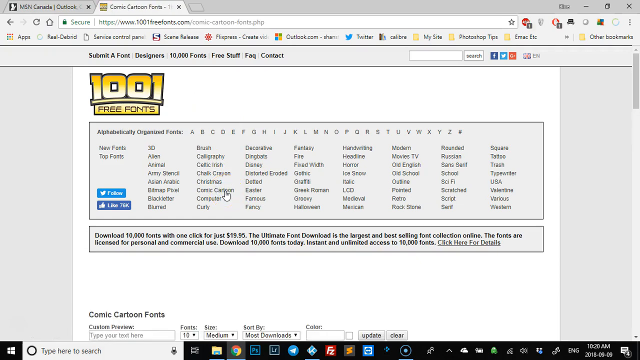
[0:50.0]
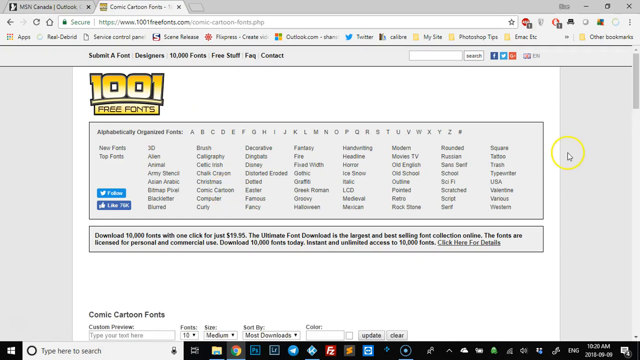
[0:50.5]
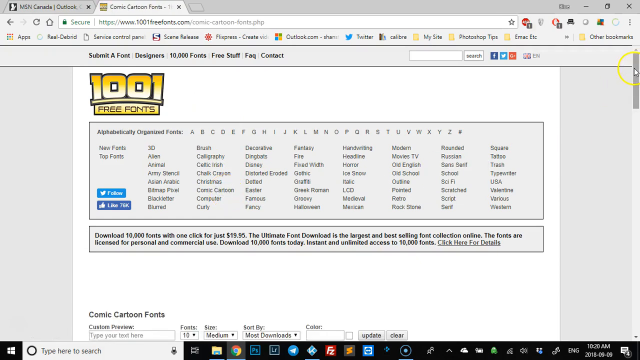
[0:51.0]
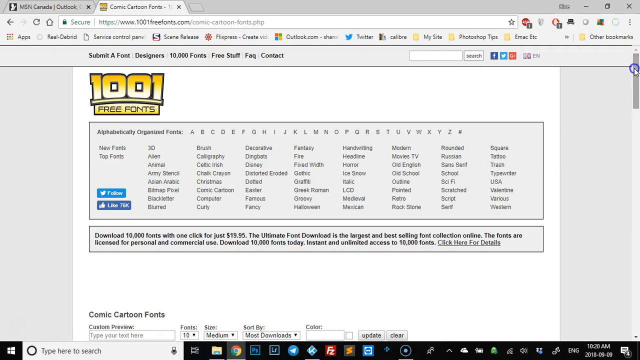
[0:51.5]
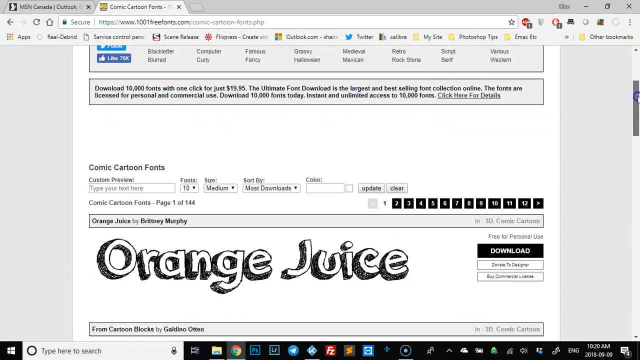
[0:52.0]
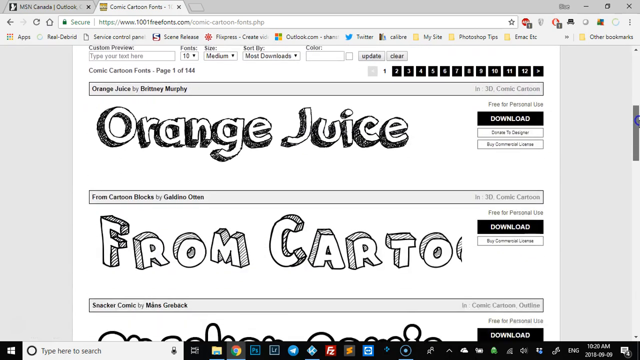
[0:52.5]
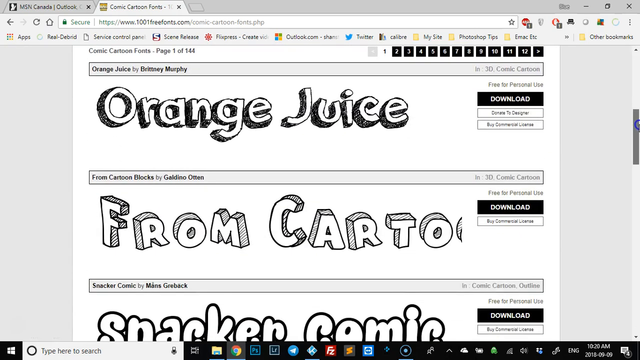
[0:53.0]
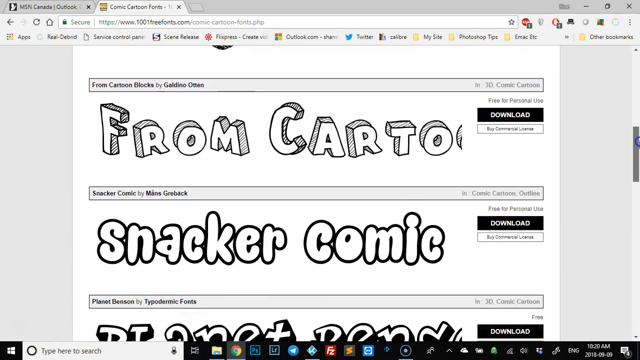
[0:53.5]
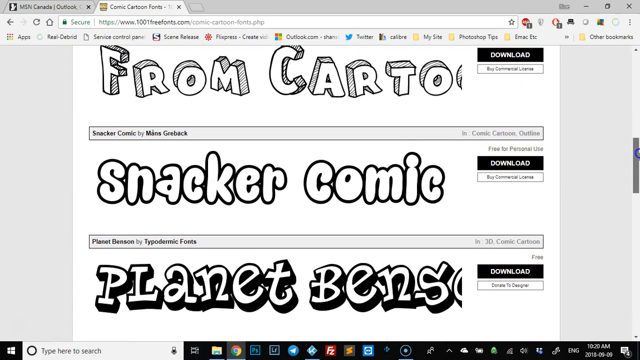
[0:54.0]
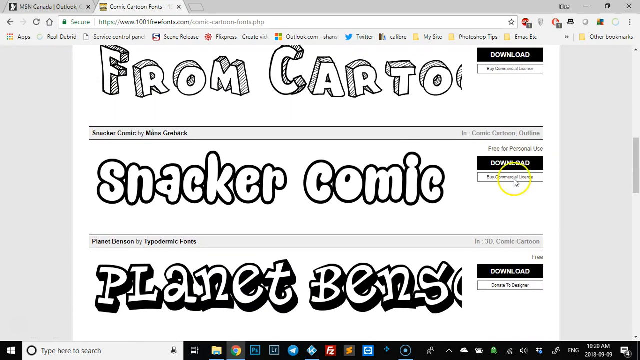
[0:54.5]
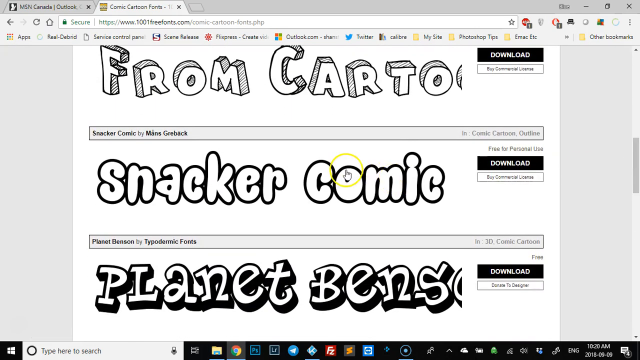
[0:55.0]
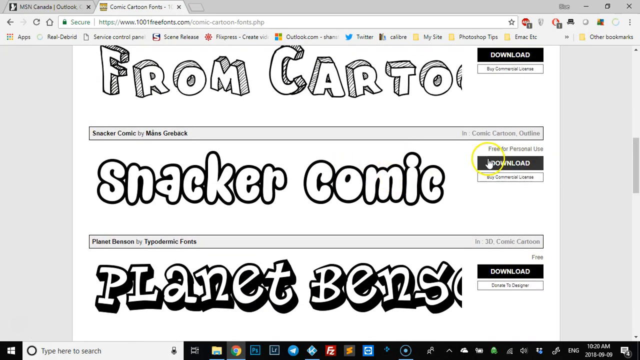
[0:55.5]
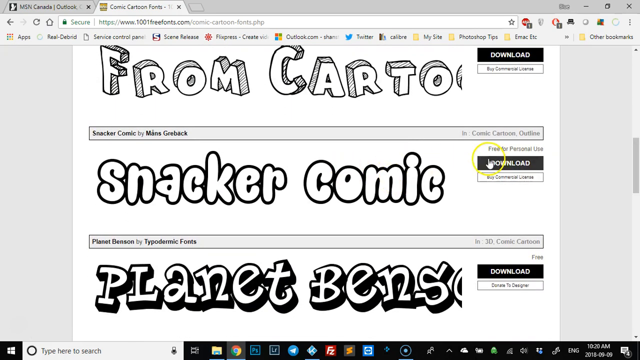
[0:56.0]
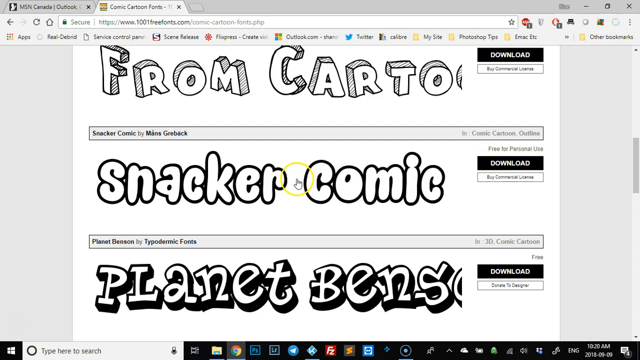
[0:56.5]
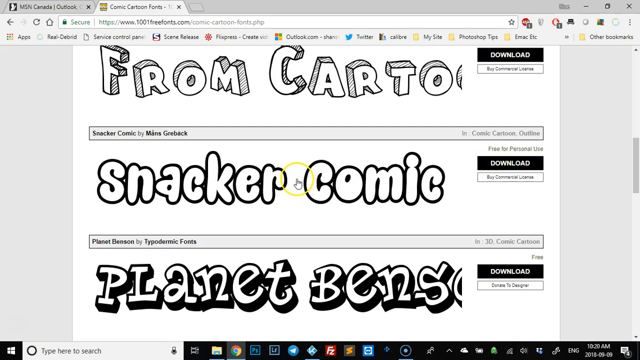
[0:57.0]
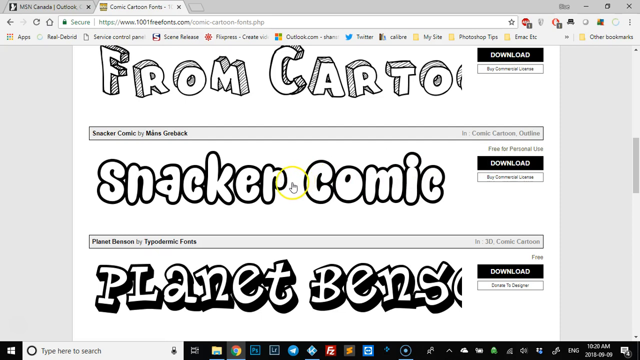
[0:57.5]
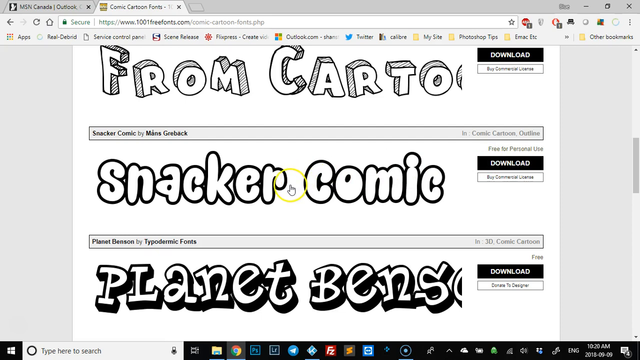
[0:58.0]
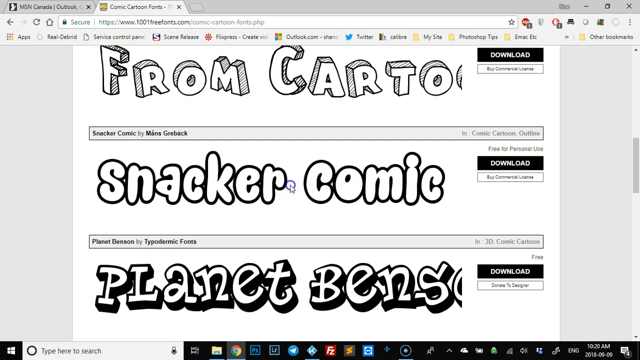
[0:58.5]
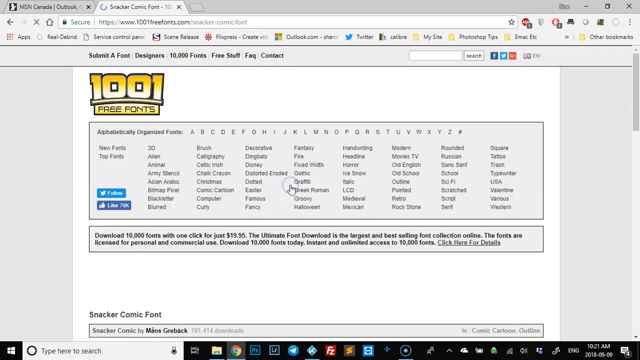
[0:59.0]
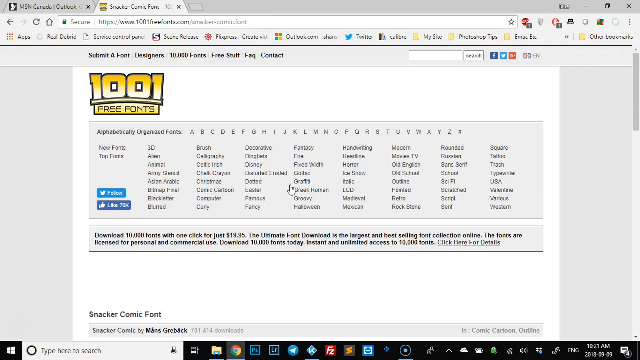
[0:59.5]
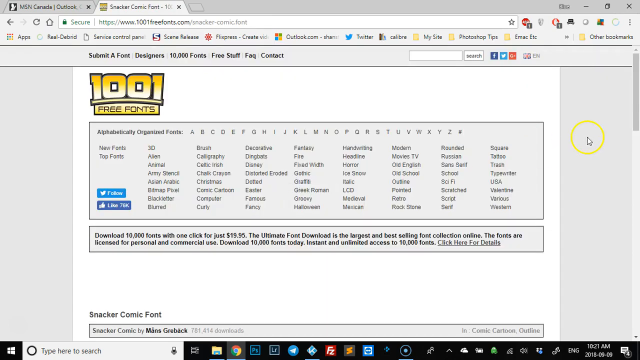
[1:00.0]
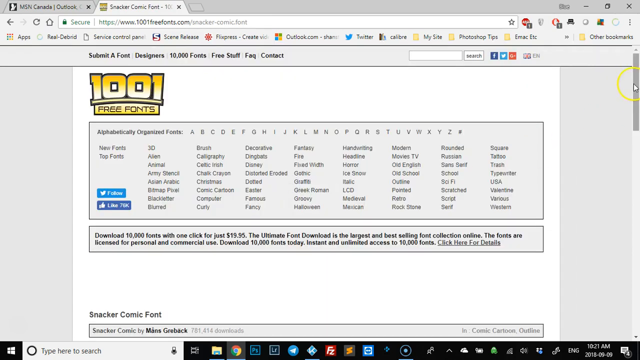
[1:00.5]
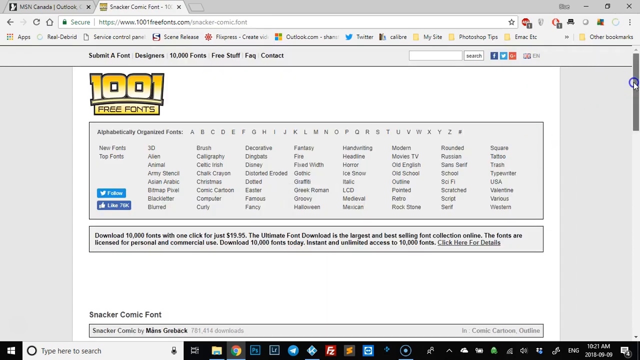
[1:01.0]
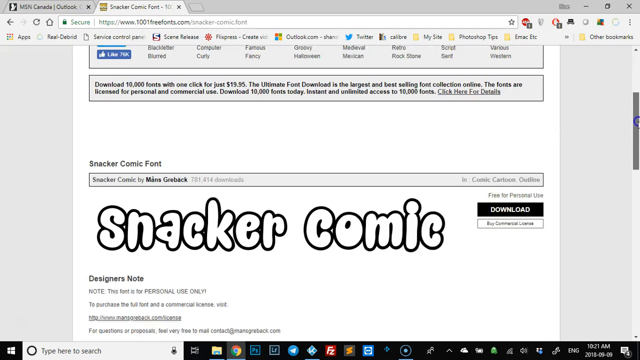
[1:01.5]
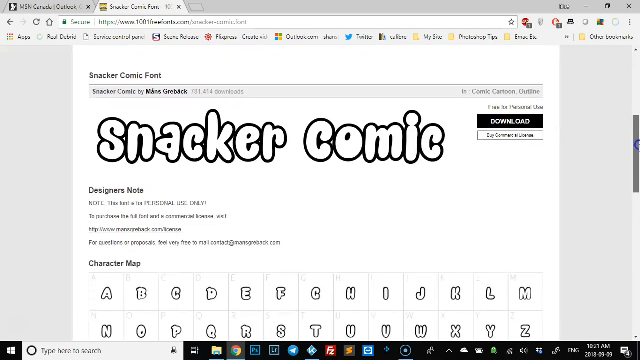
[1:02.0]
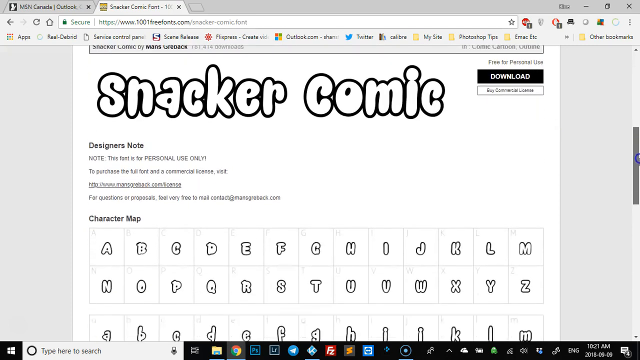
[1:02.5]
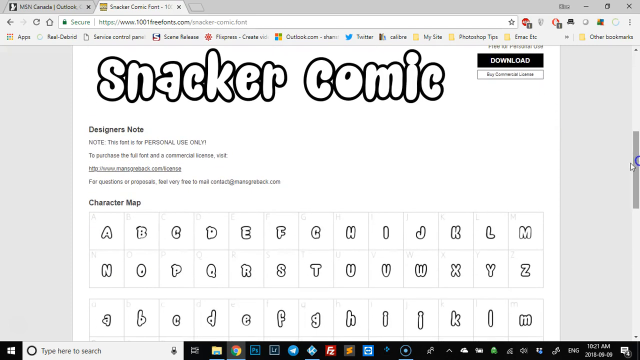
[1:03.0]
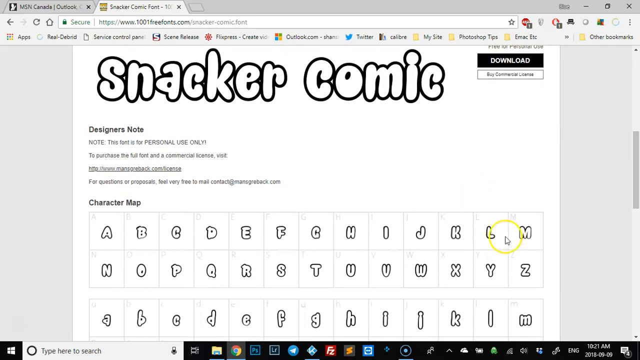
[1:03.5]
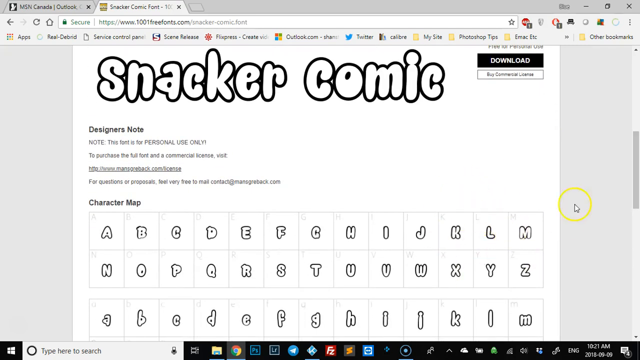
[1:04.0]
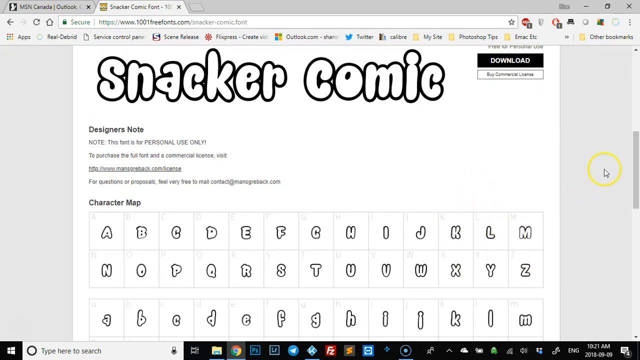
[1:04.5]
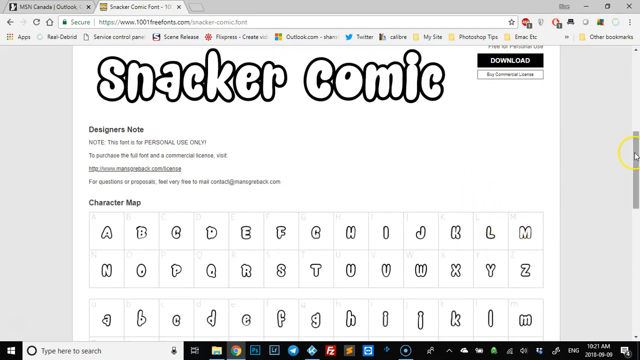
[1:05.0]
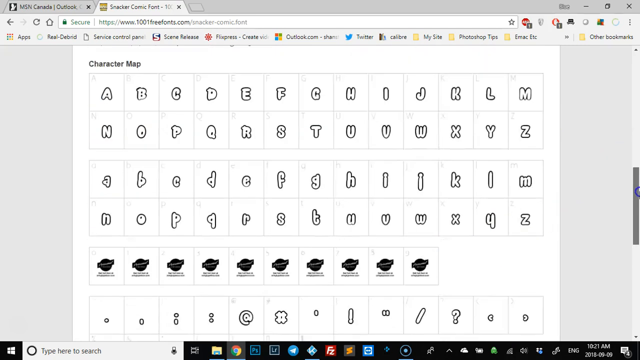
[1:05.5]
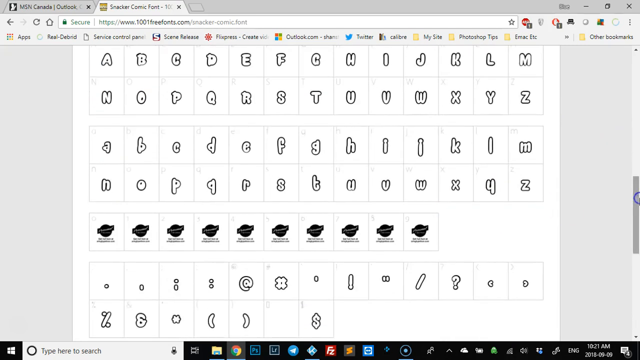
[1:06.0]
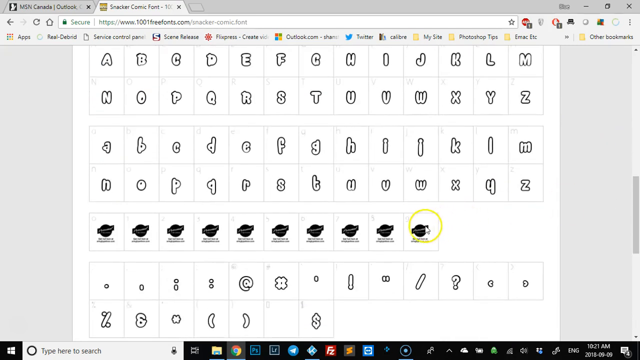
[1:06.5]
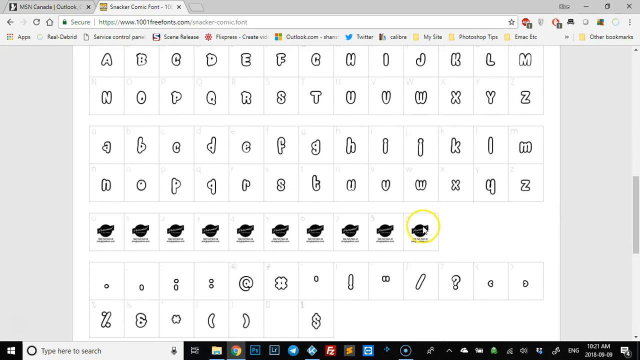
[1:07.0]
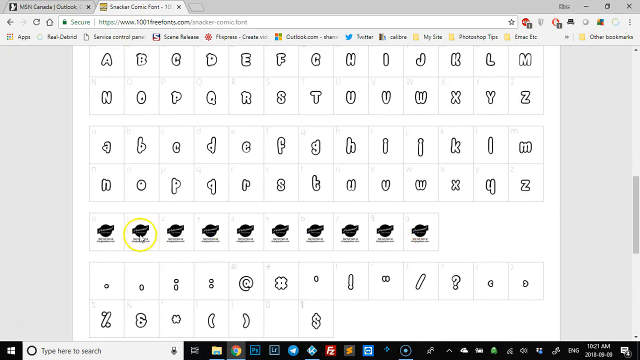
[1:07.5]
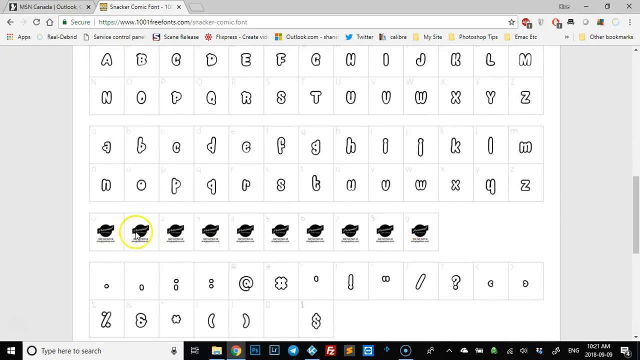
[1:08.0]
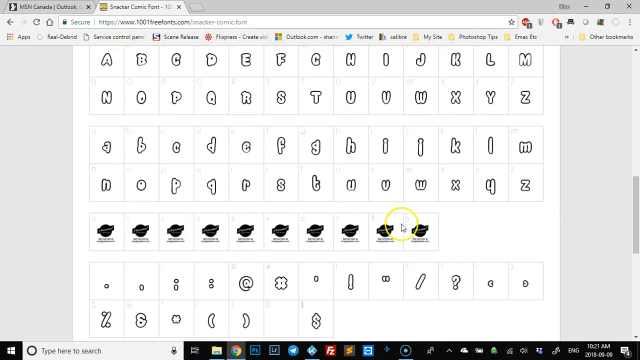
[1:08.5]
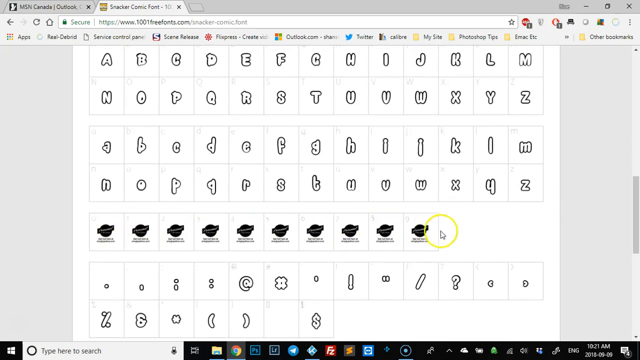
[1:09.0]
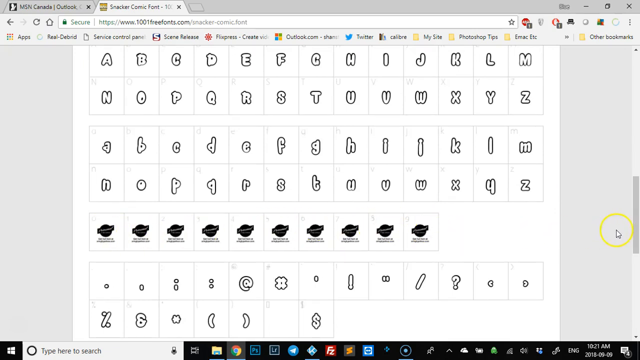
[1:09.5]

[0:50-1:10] The 1,001 free fonts page is shown, with the person highlighting "cosmic cartoon," one of the fonts. More selections are visible in multiple rows, about eight of them. Apparently one says "3D" and another says "alien"; there are also "animal," "army" something, "Asian," "Arabic," and more. They seem to be in alphabetical order, and the page says they are organized that way. At the top of the selections there is a quick link for each letter to show the fonts within that letter. The user scrolls down, and the actual fonts appear underneath their names as large graphics or banners that look like demos. It also looks like they can be downloaded, as a download logo appears right next to each example.